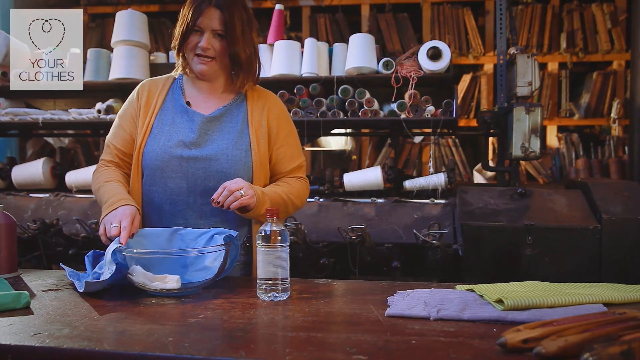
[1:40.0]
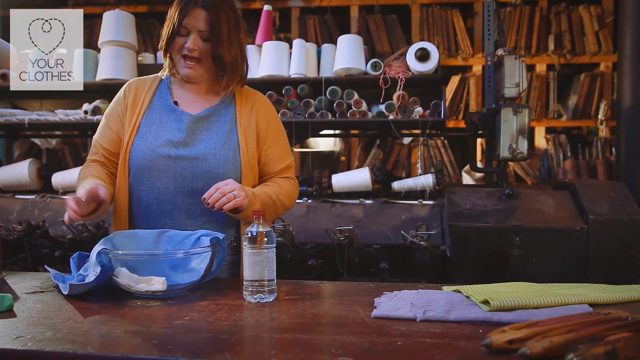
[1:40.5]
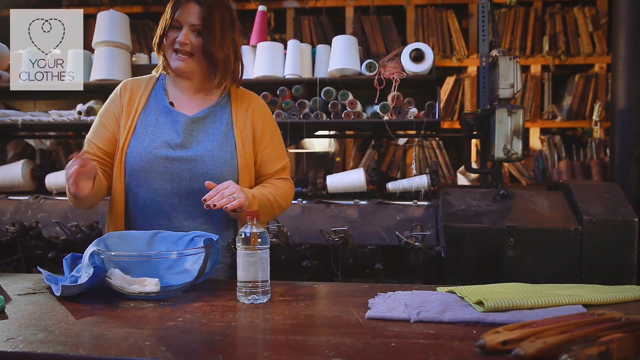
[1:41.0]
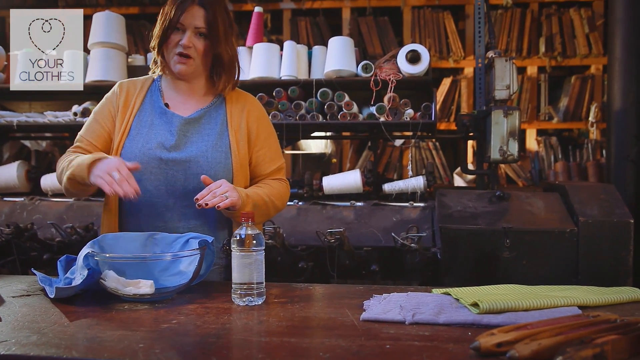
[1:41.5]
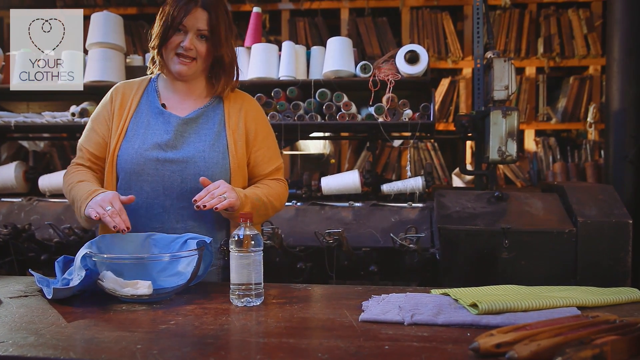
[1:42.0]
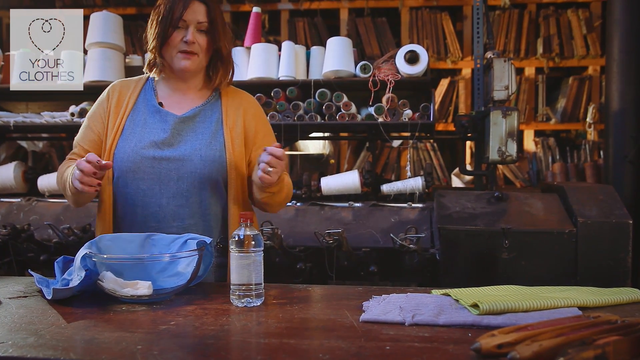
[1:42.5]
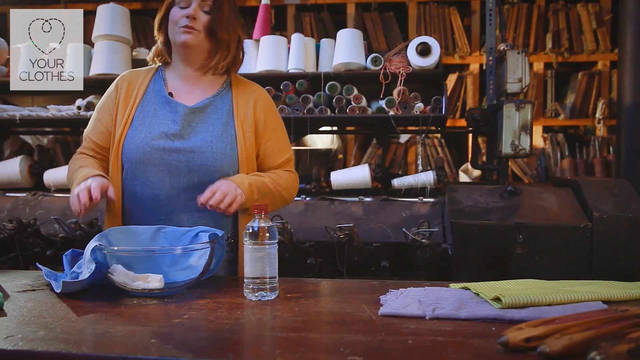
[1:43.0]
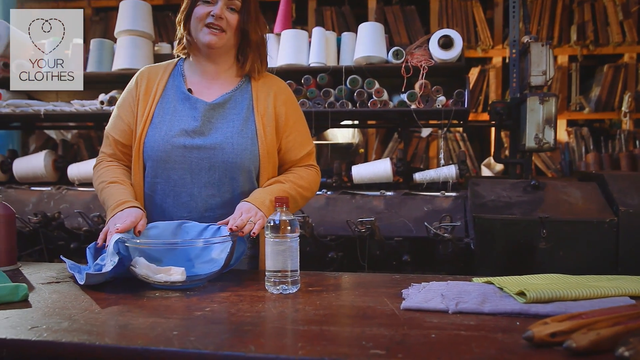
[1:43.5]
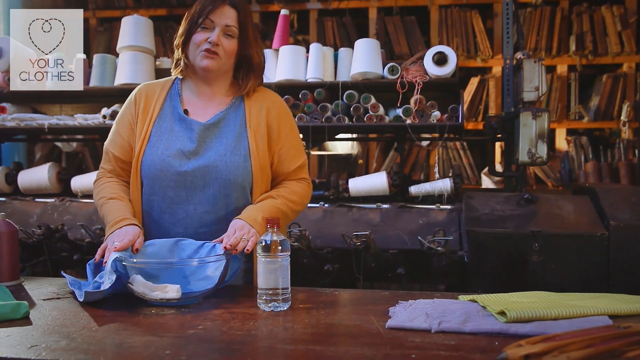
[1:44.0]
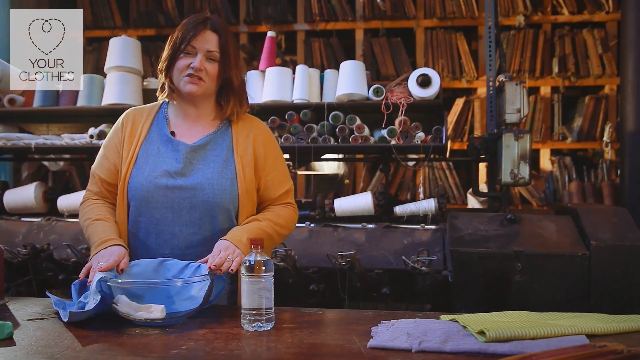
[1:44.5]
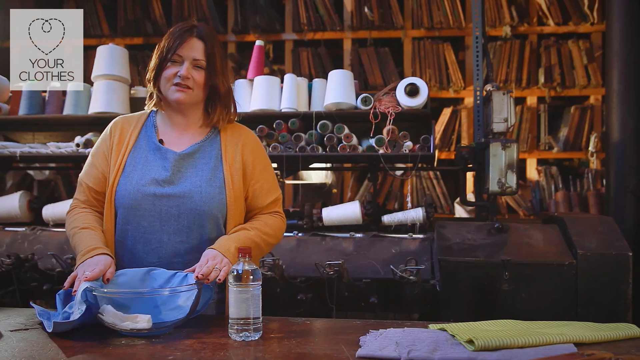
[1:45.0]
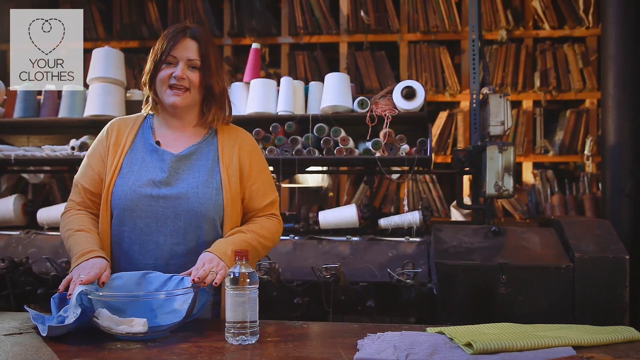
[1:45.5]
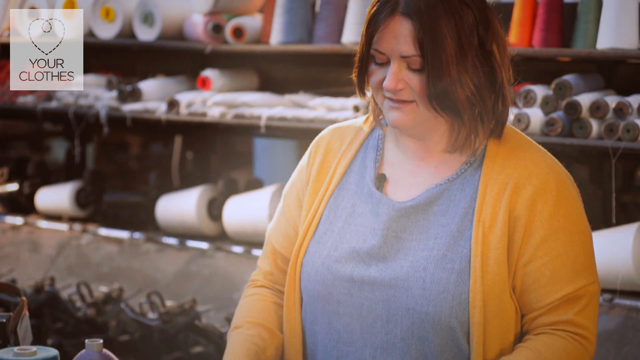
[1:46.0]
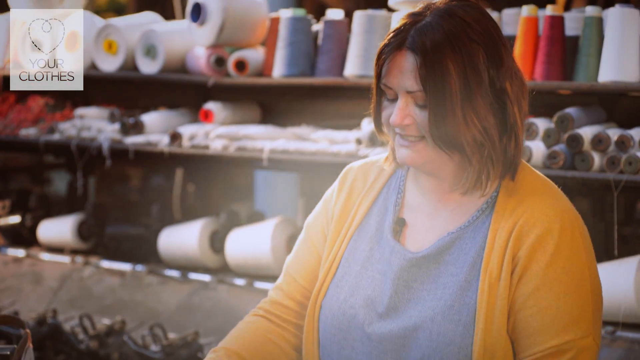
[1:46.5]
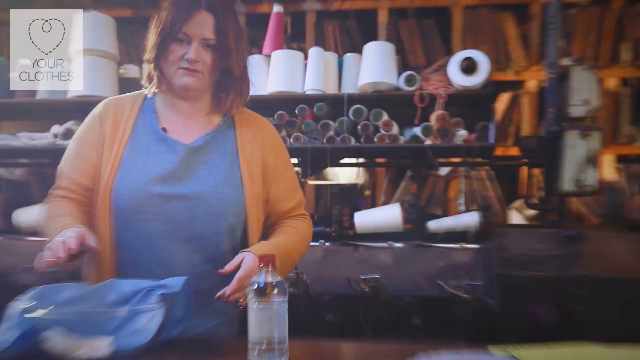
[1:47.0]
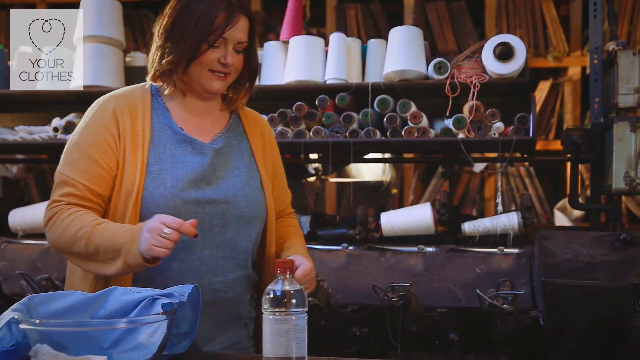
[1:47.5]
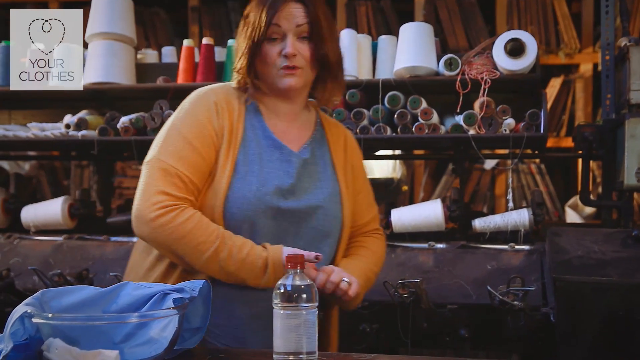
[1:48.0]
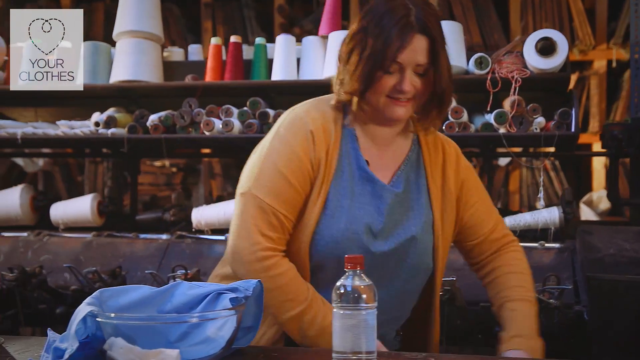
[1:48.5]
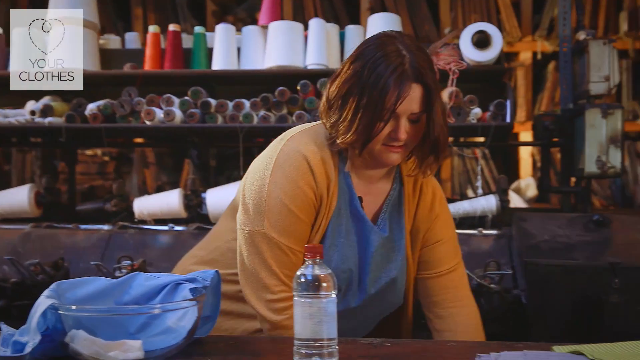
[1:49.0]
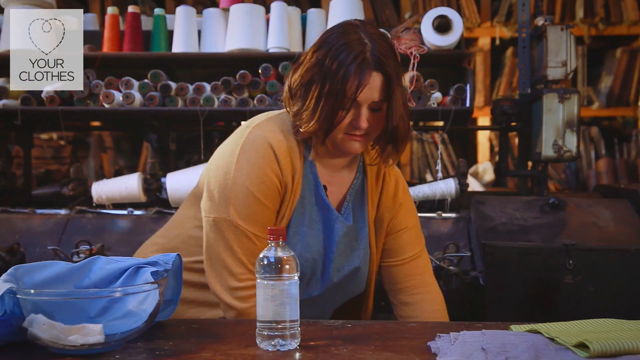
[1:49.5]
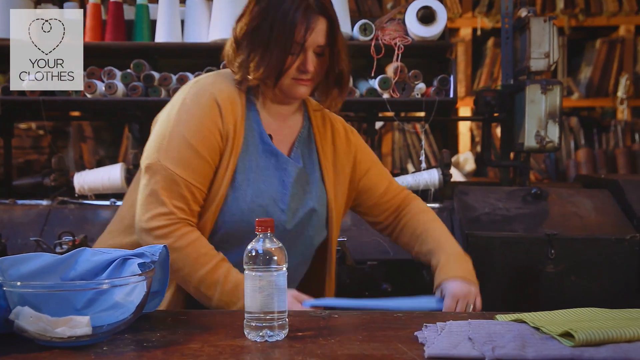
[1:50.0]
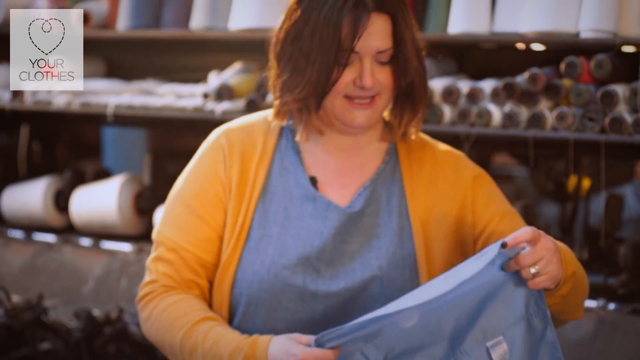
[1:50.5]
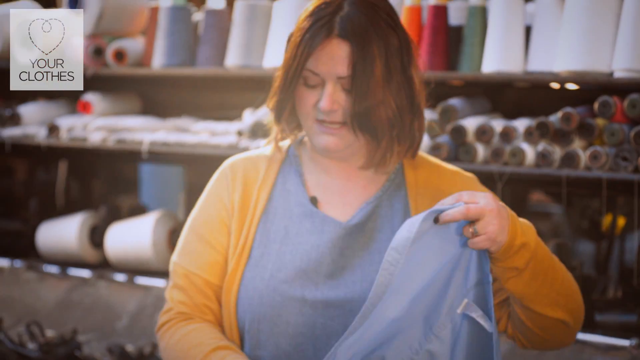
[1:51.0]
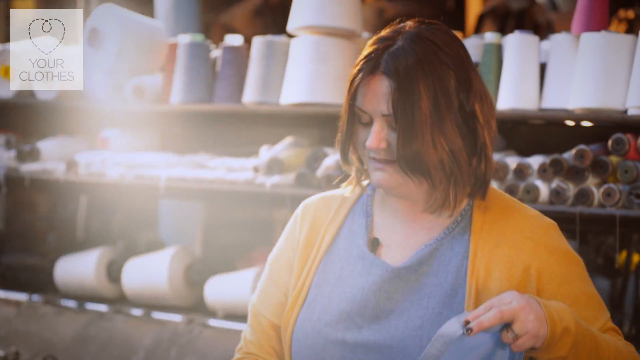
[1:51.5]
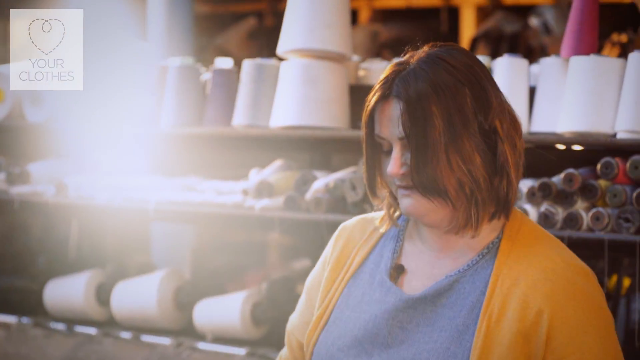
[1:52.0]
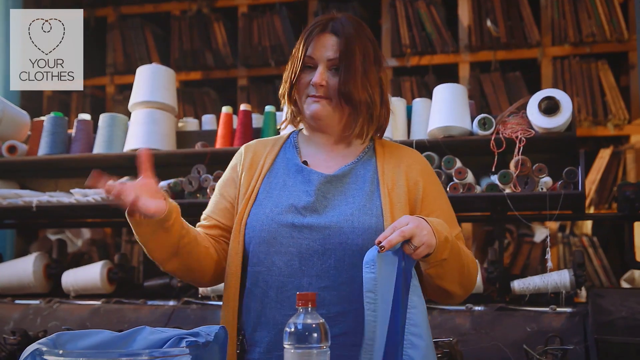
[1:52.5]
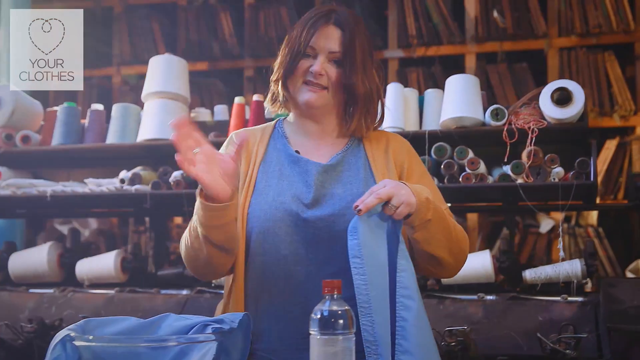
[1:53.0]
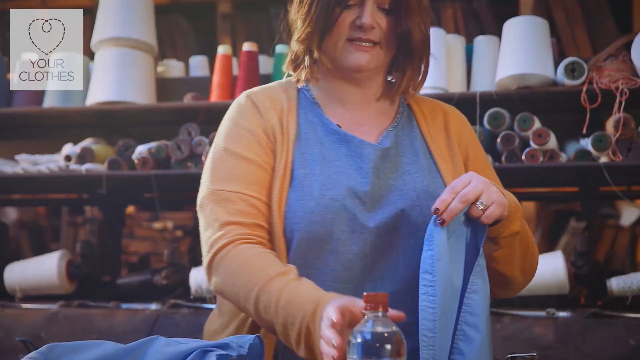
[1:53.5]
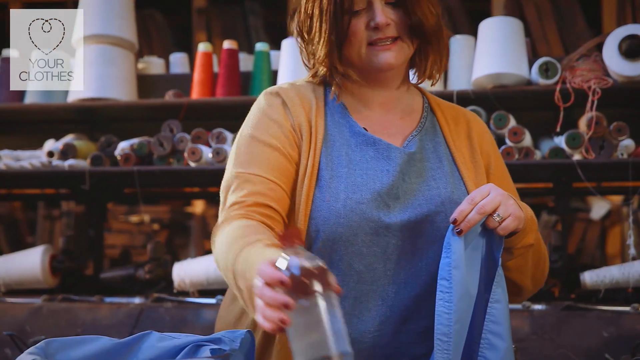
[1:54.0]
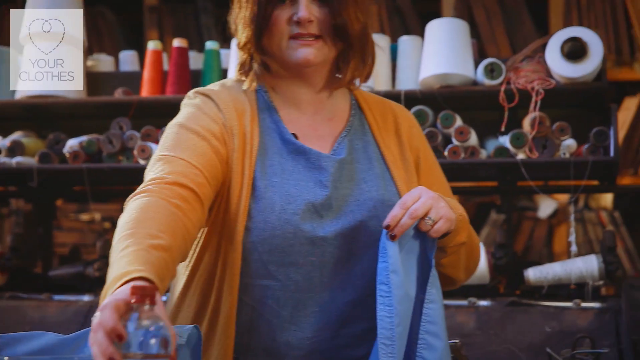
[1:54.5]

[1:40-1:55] A woman explains how she cleaned a piece of clothing. A piece of clothing is in a bowl with a cloth, saturated with a little liquid, and she holds up a separate piece of clothing off to the side to show the differences. She has shoulder-length brown hair and wears a yellow to almost orange sweater with a blue top underneath. She appears to be in a workshop or textile shop, with various spools of material and yarn on shelving and stacked and piled behind her. In front of her is a wooden tabletop with various types of material and a clear bowl holding a blue shirt and a white cloth. She holds another blue shirt up into the camera frame. Also on the tabletop is a clear bottle that appears to be a liquid cleaner of some sort, with a red cap and no label.